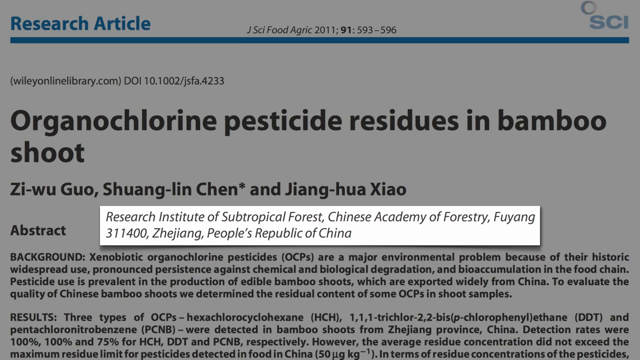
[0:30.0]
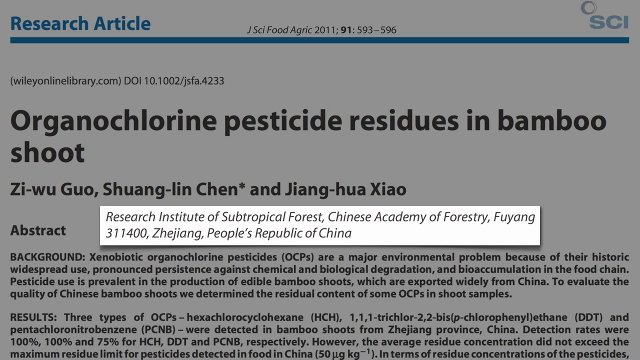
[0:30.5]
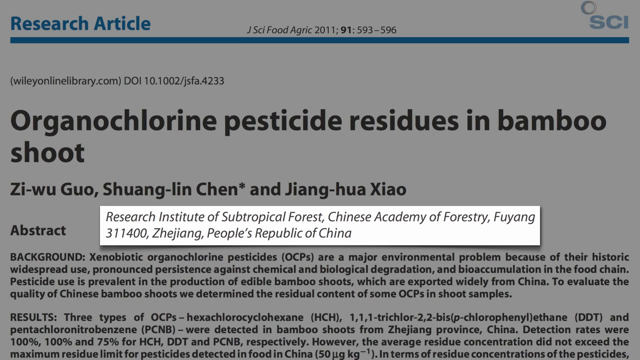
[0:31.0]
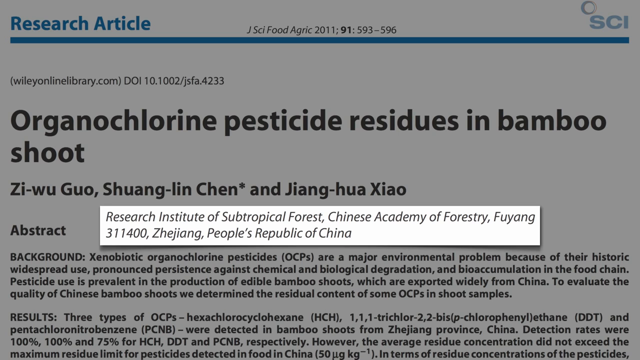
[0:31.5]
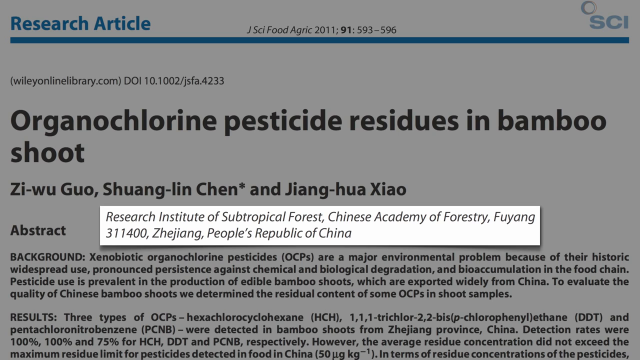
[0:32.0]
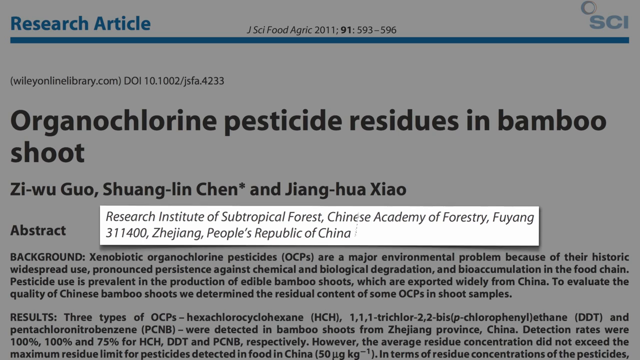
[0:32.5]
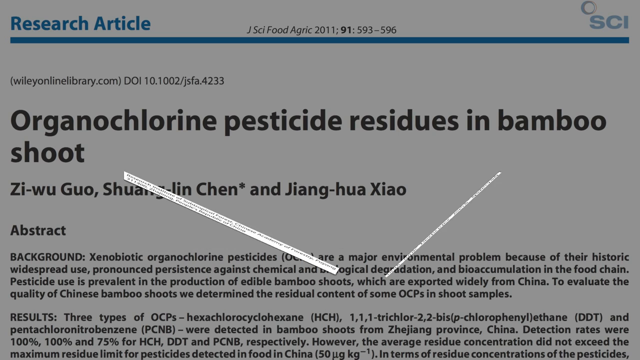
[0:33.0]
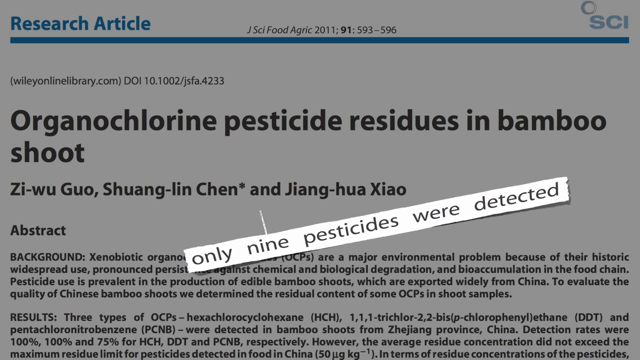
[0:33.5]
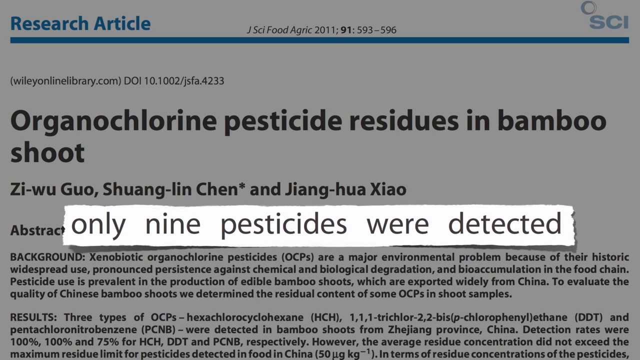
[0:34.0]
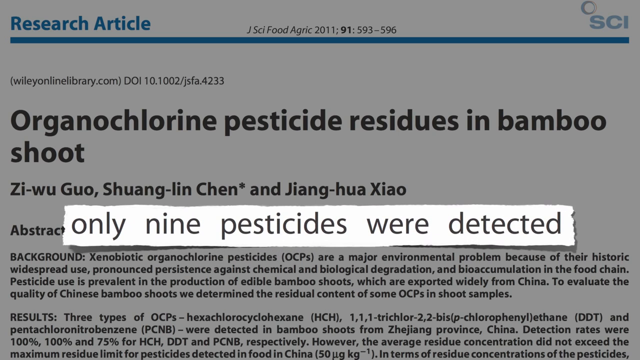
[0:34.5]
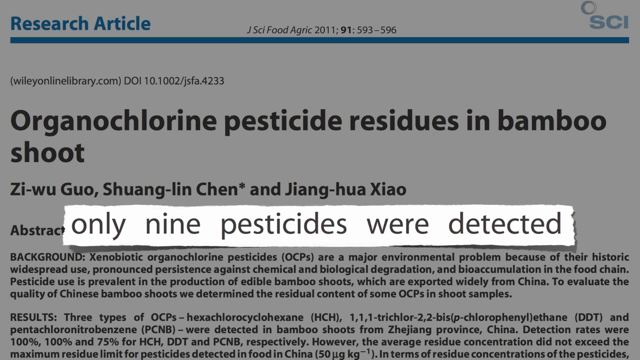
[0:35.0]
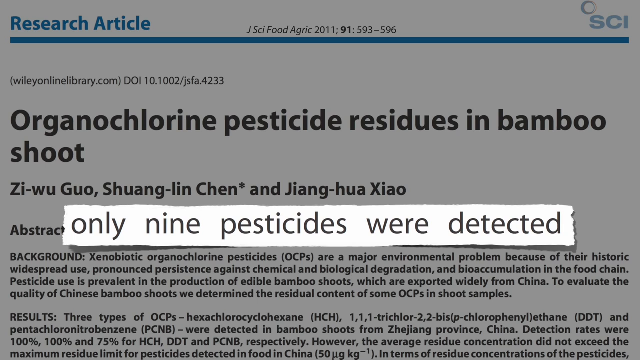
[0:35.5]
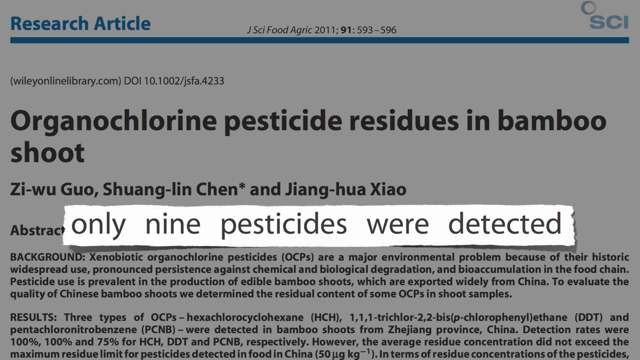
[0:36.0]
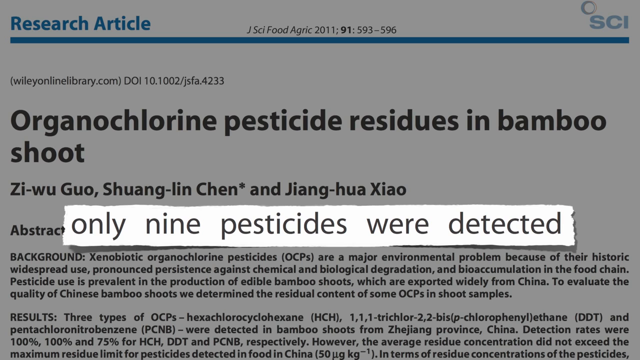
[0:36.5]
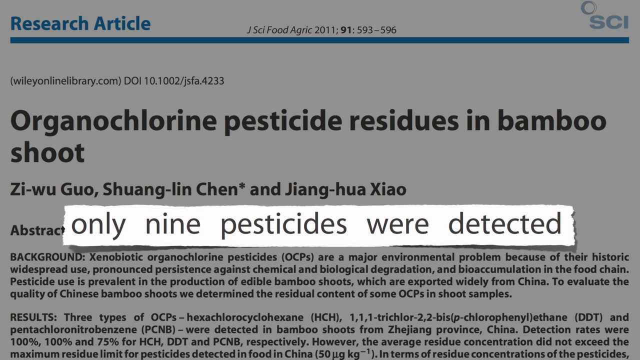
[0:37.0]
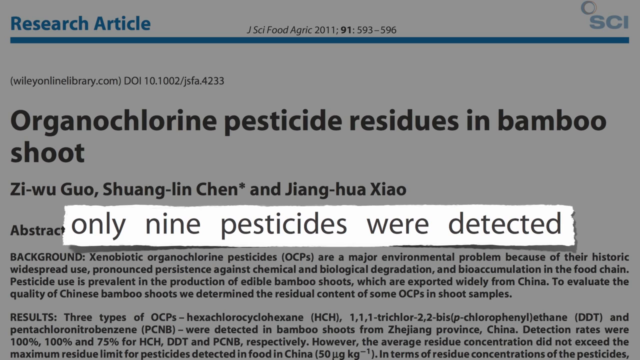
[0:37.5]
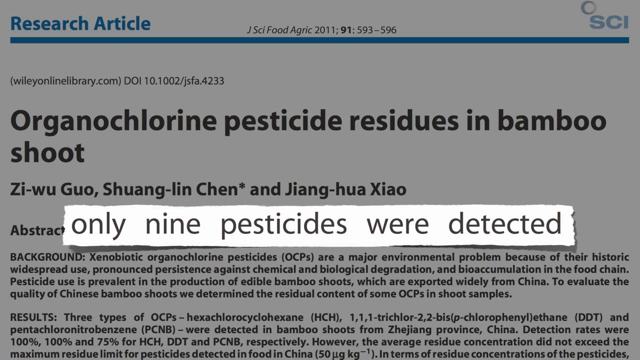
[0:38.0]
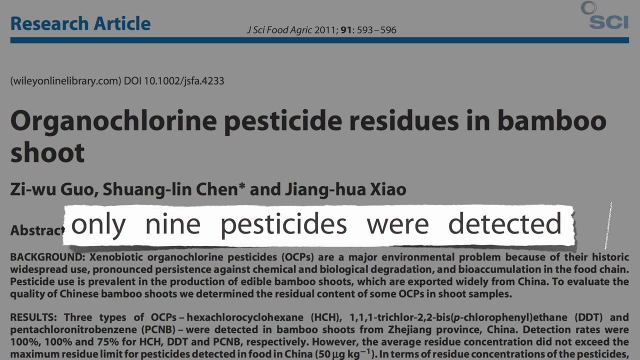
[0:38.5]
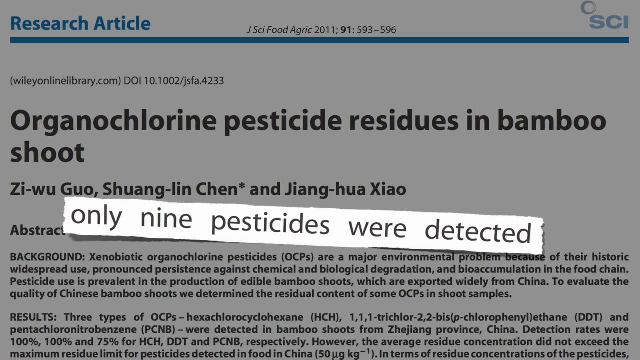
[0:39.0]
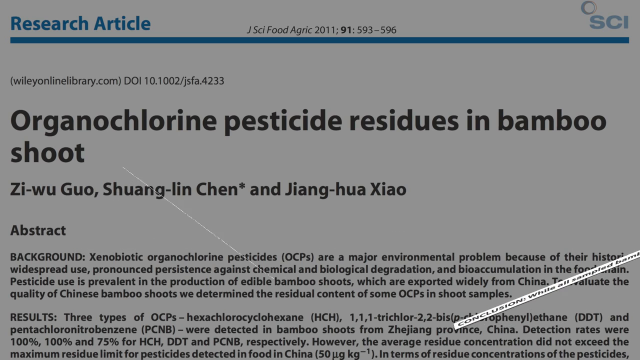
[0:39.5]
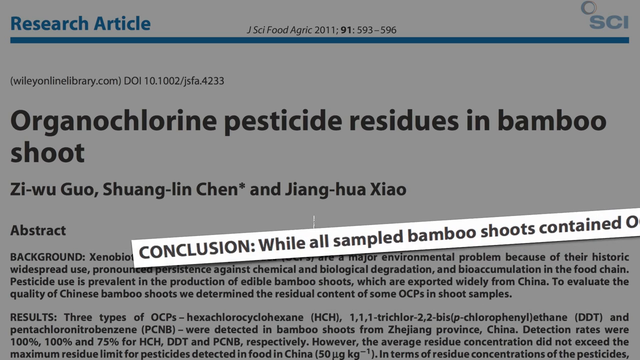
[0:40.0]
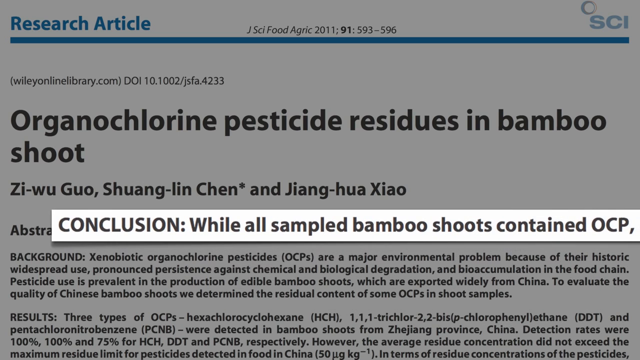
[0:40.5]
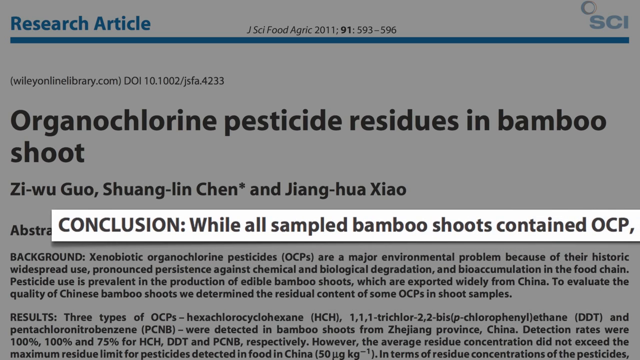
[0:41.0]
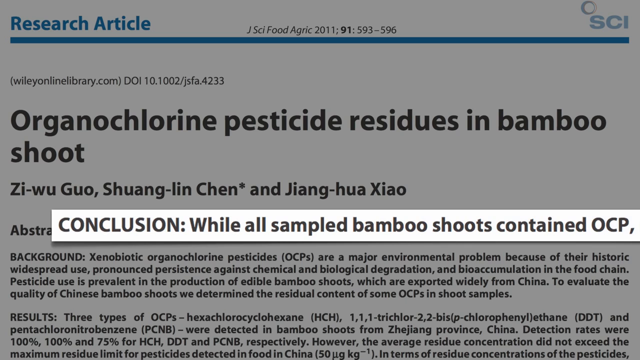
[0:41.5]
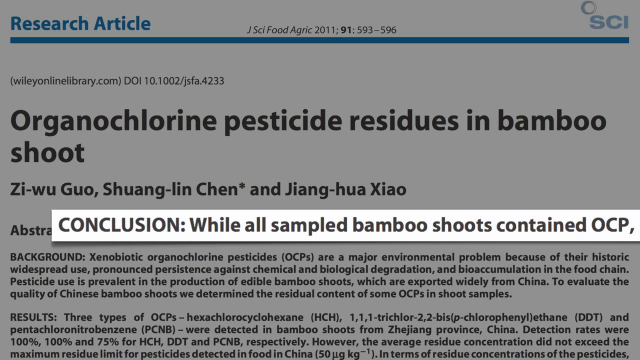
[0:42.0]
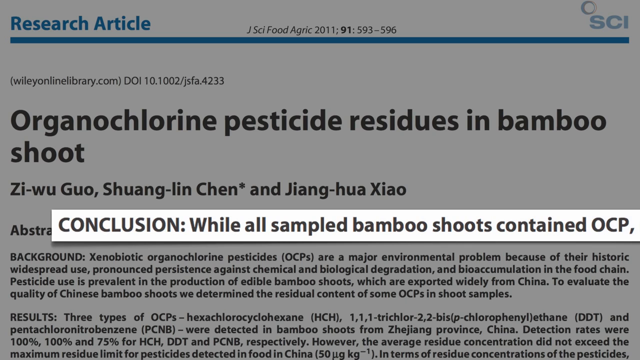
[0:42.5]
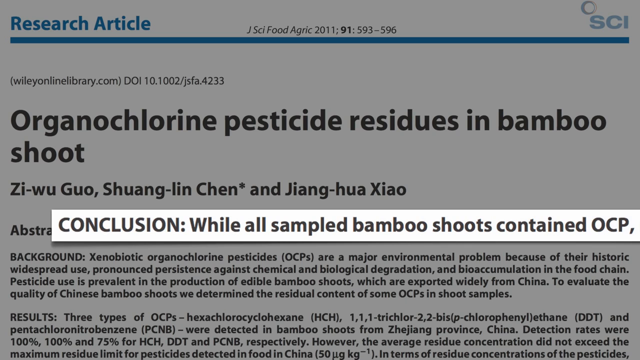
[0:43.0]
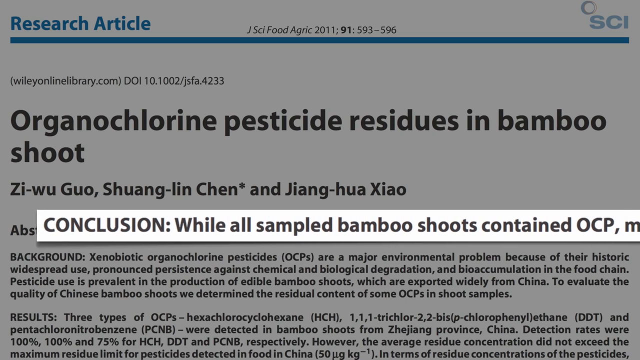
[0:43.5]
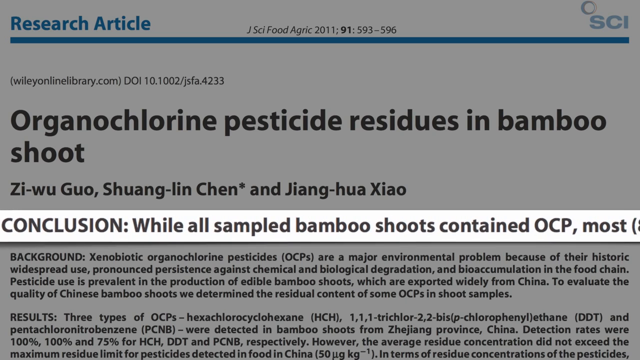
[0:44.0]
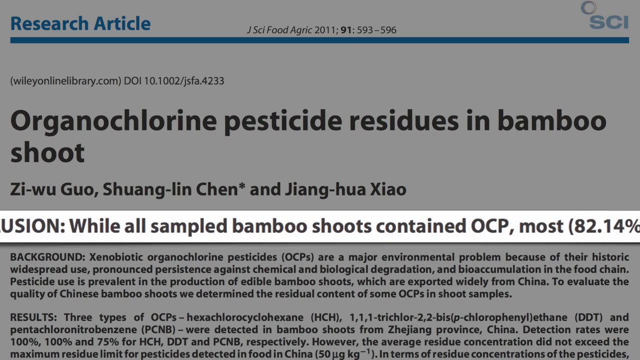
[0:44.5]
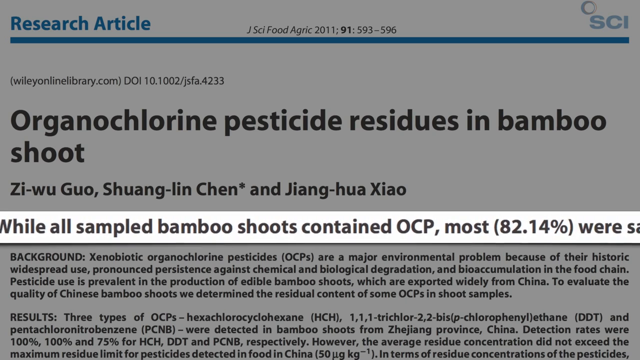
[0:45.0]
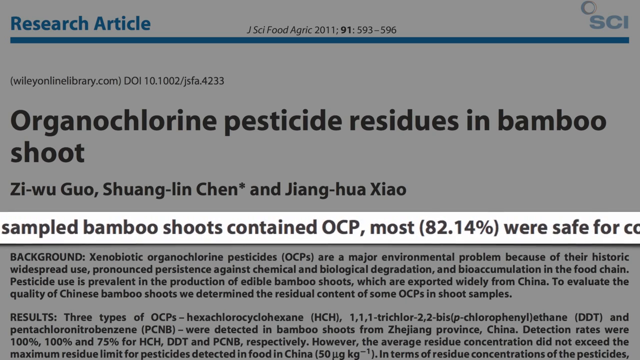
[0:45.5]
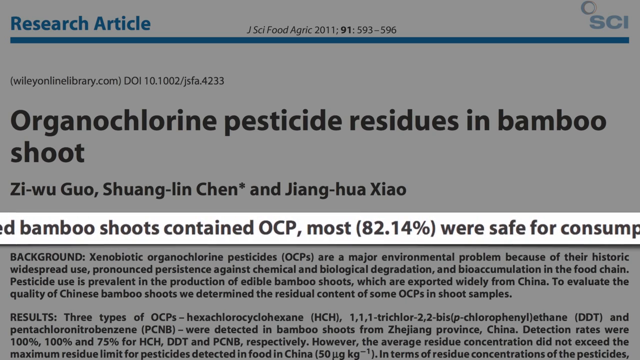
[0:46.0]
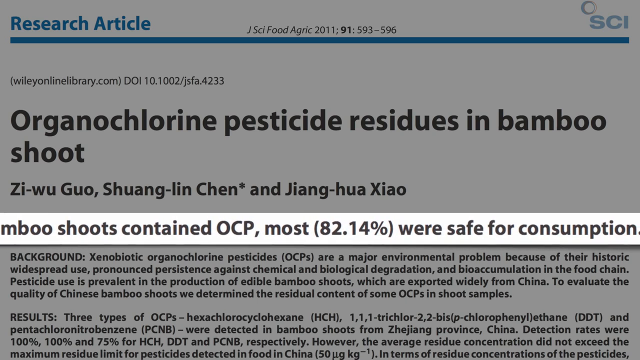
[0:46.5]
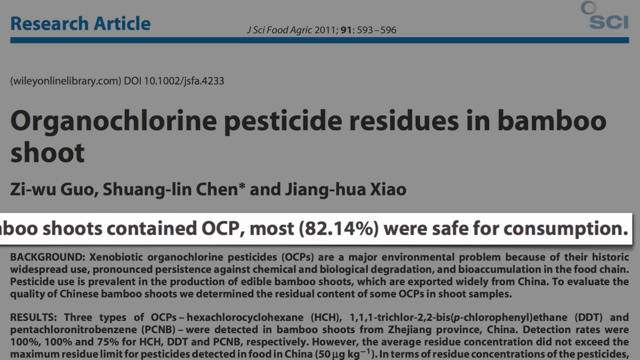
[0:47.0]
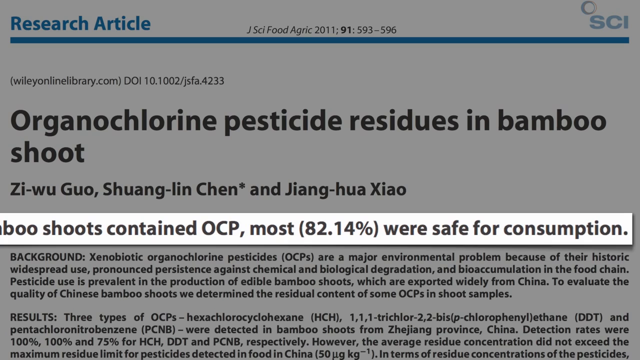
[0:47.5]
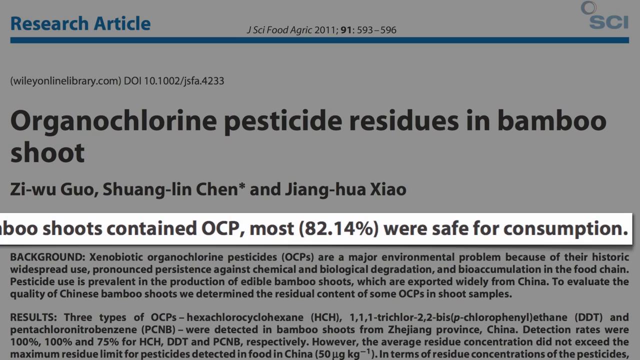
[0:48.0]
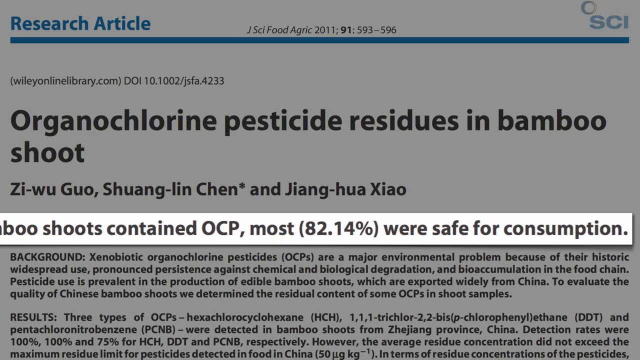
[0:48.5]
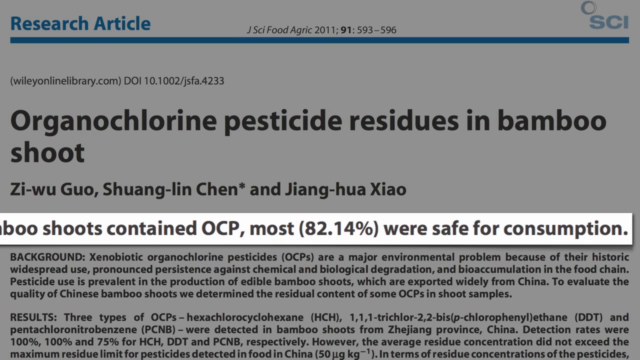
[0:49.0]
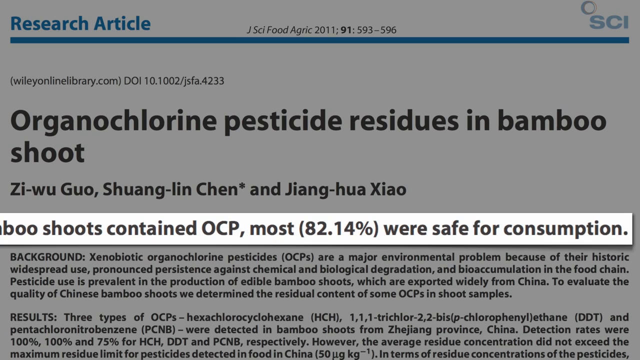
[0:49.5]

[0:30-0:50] A research article on organochlorine pesticide residues in bamboo shoot appears greyed out in the background. "Research article" is in blue in the left corner with a line underneath, followed by the website address in black, left-justified, and the title of the article. Beneath it the three authors are named, followed by an abstract. Superimposed on this is a white text box reading "Research Institute of Subtropical Forest, Chinese Academy of Forestry" with their address. This box then goes off the page and a new text box appears saying "only nine pesticides were discovered". That box is removed and another appears reading "Conclusion. While all sampled bamboo shoots contained OCP, most were safe for consumption." The text scrolls across the screen from left to right so it can be read as it moves.